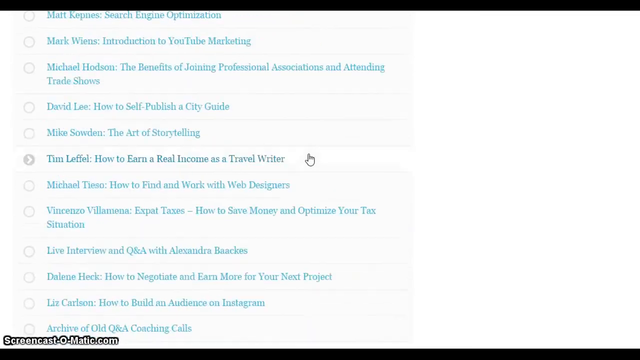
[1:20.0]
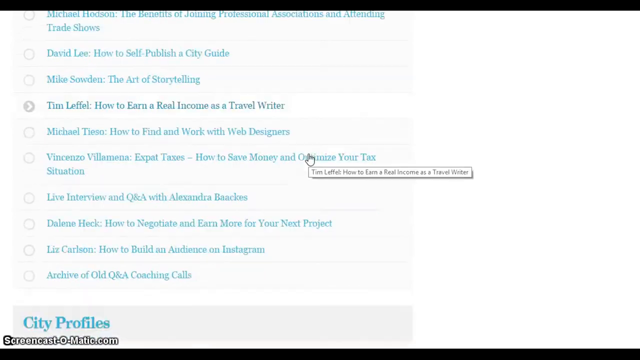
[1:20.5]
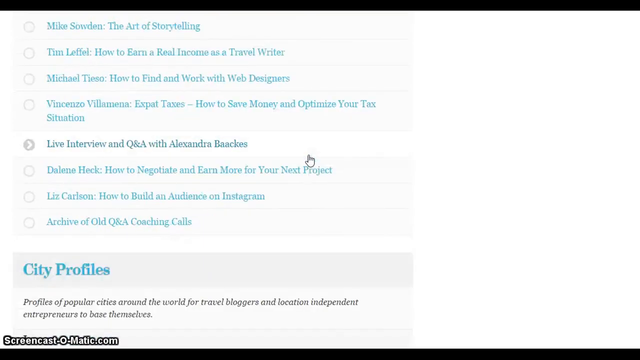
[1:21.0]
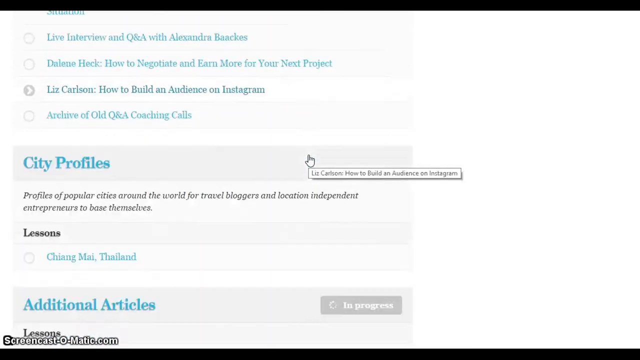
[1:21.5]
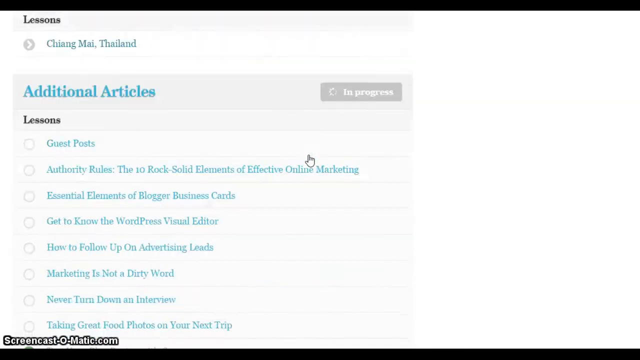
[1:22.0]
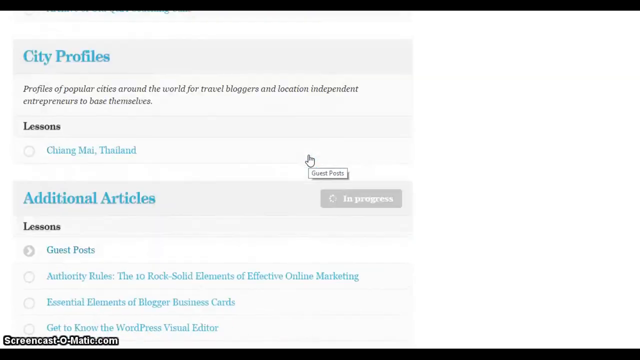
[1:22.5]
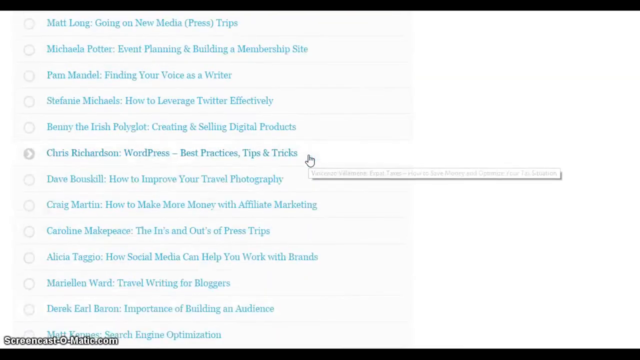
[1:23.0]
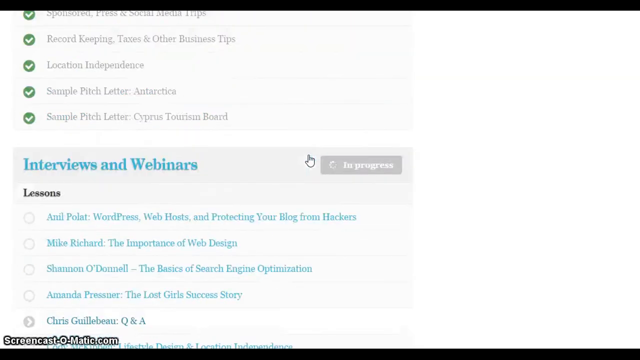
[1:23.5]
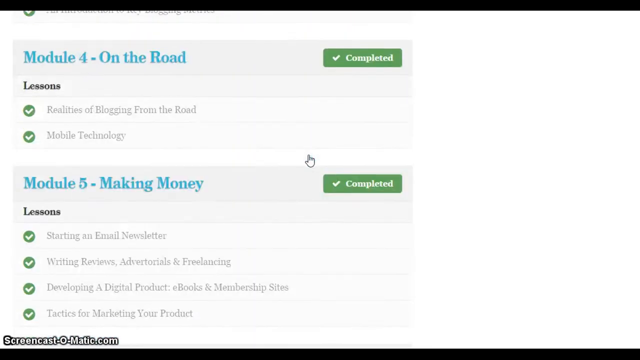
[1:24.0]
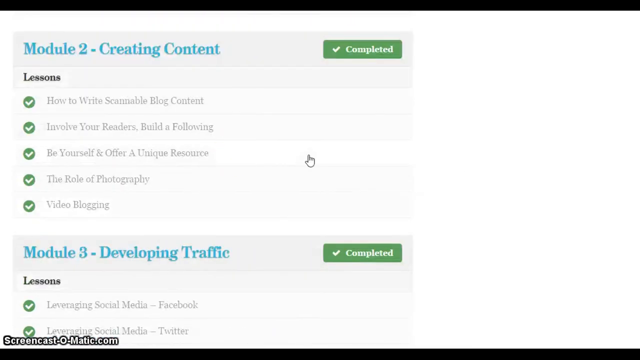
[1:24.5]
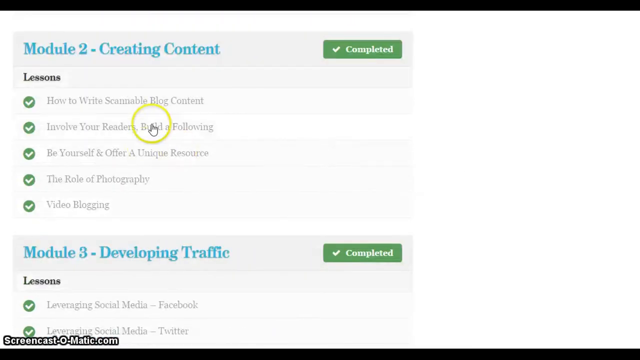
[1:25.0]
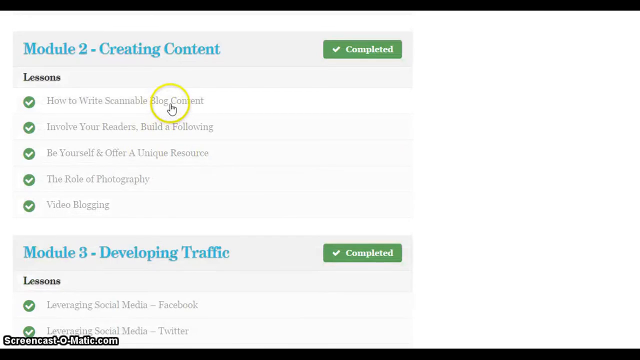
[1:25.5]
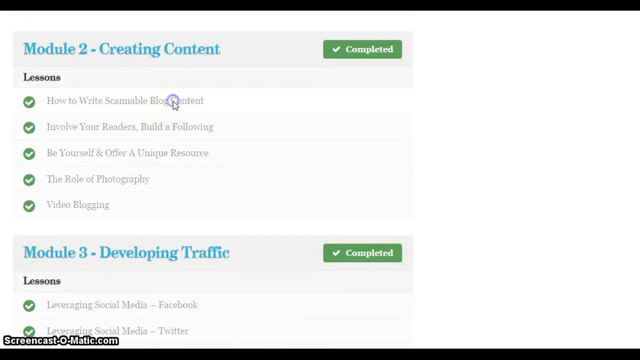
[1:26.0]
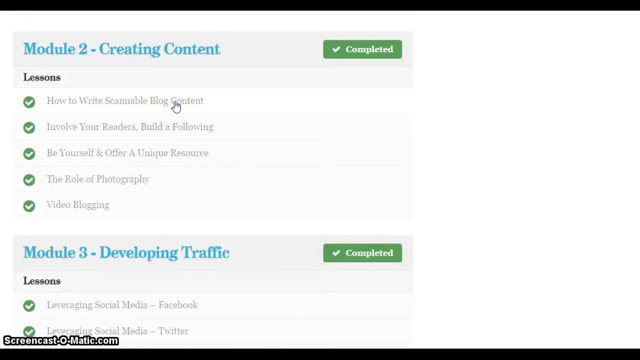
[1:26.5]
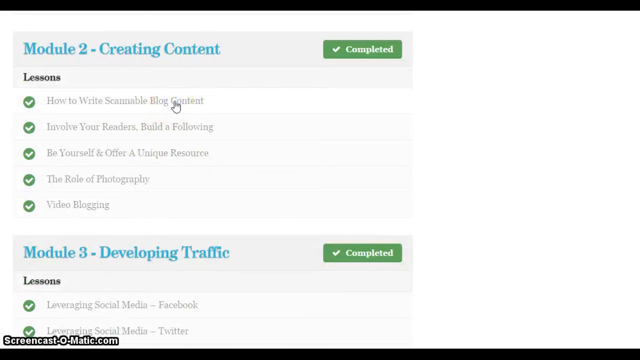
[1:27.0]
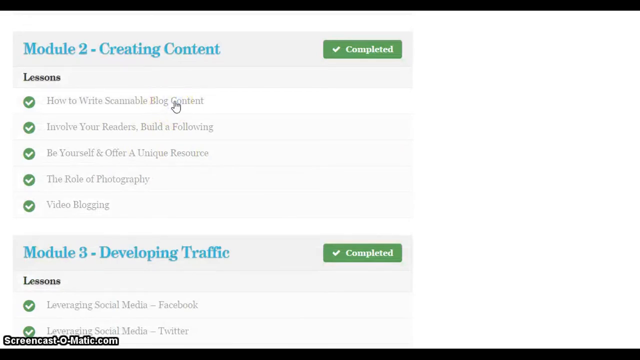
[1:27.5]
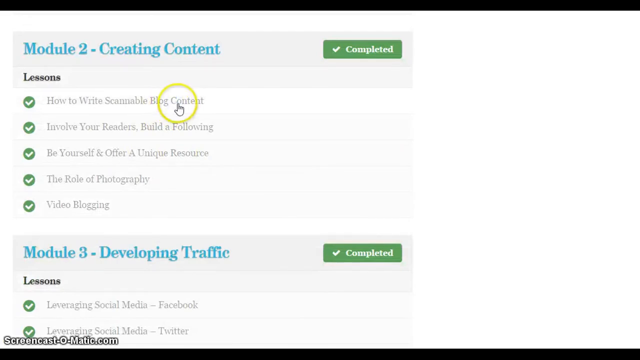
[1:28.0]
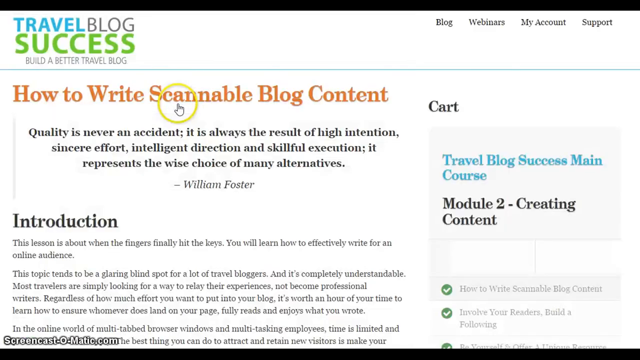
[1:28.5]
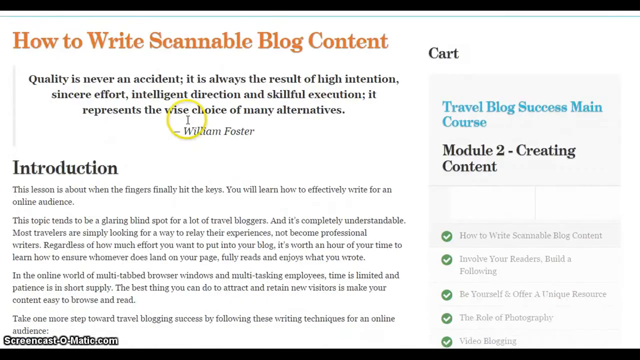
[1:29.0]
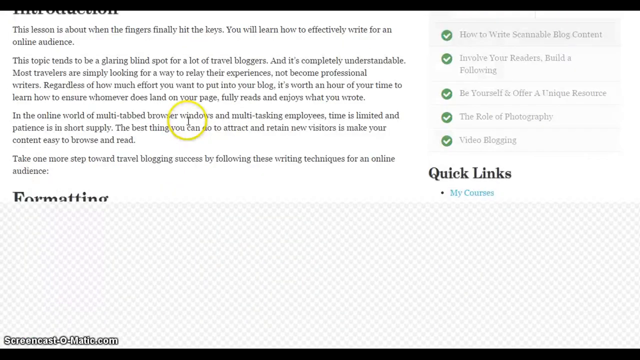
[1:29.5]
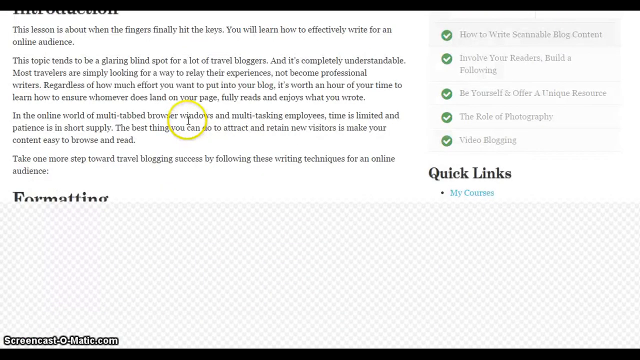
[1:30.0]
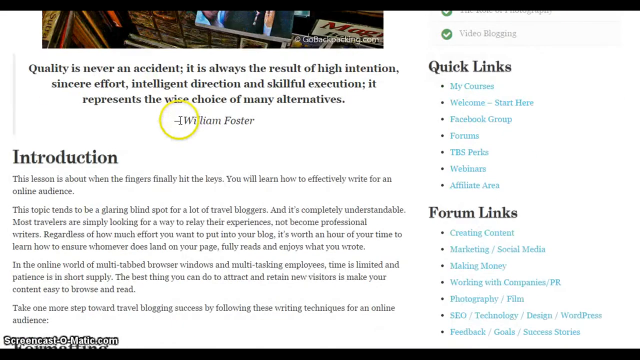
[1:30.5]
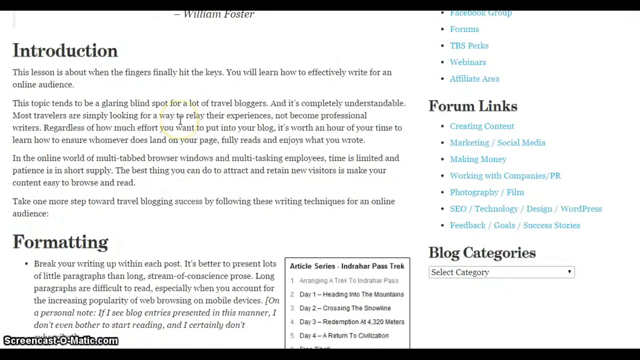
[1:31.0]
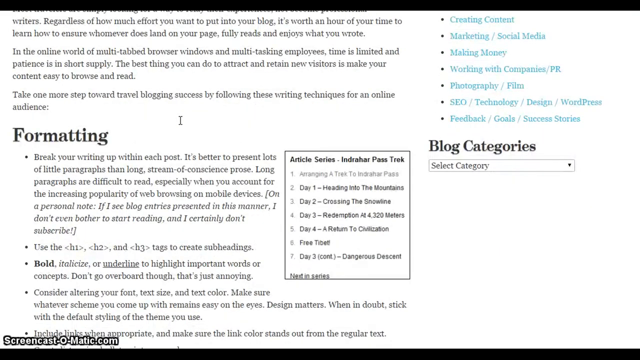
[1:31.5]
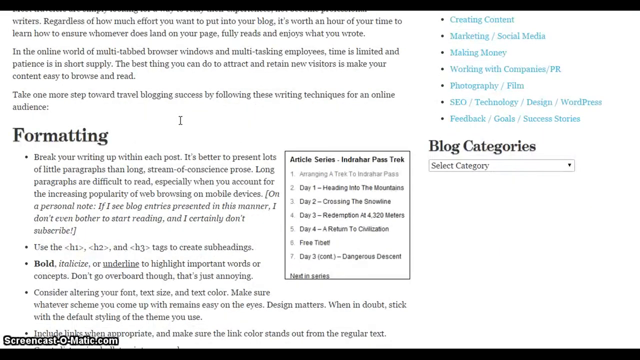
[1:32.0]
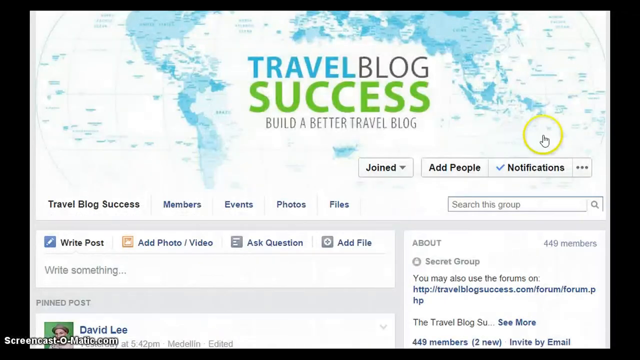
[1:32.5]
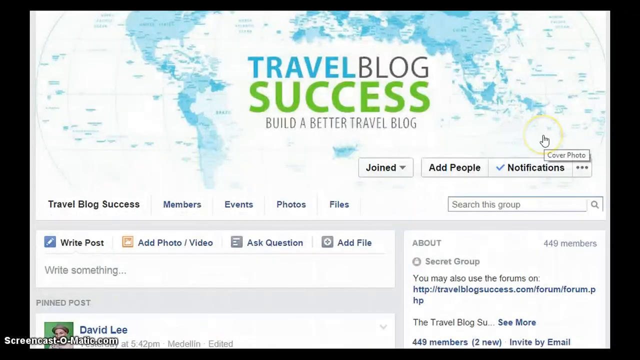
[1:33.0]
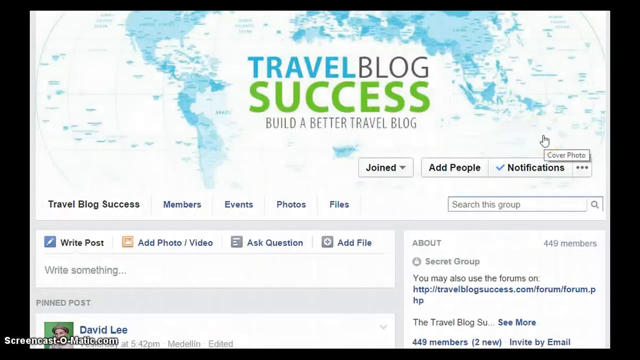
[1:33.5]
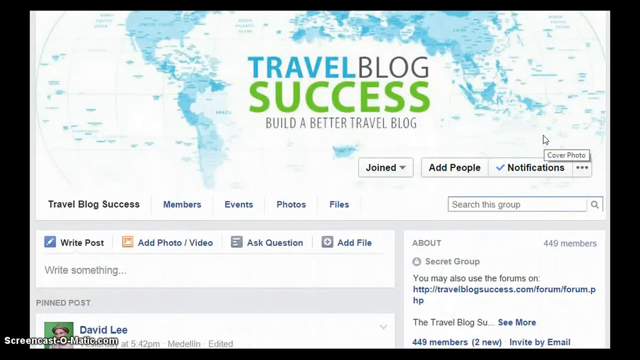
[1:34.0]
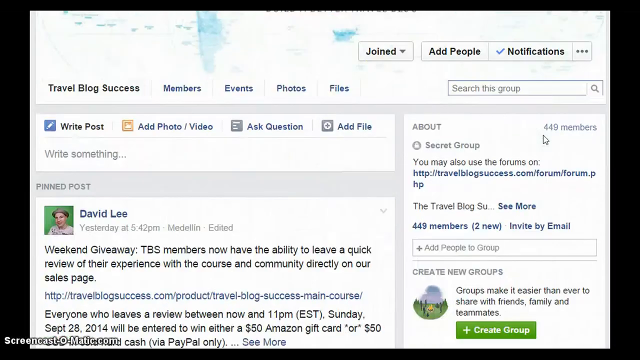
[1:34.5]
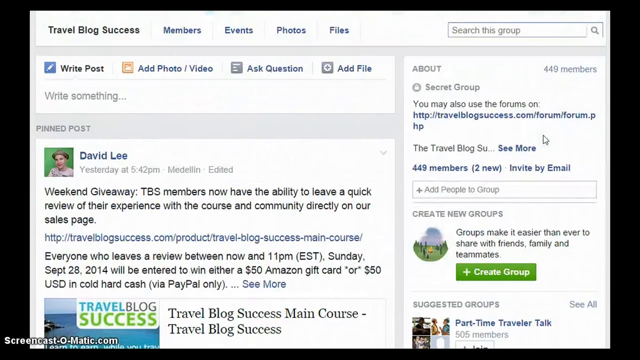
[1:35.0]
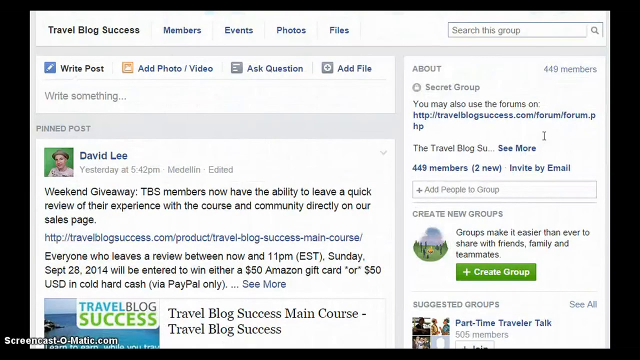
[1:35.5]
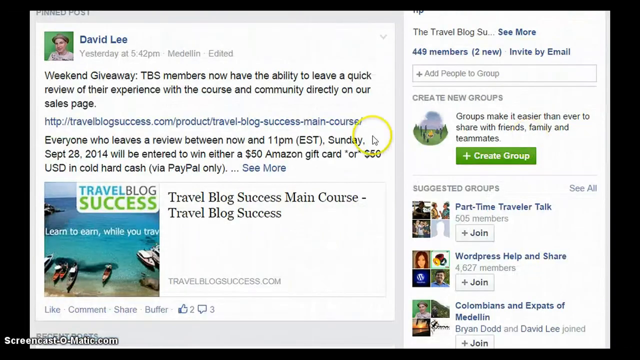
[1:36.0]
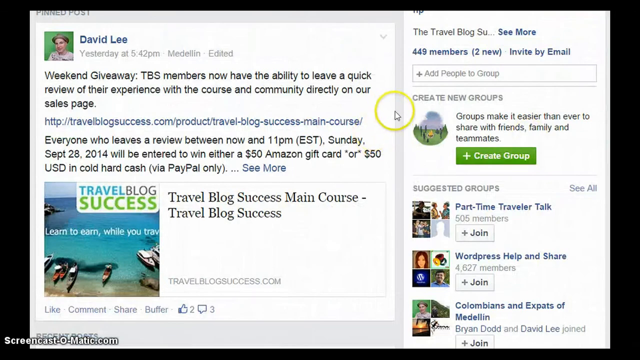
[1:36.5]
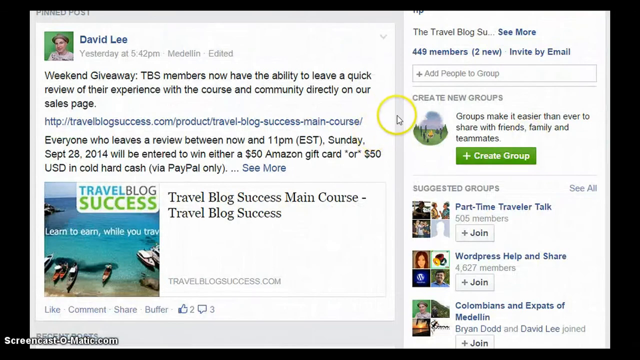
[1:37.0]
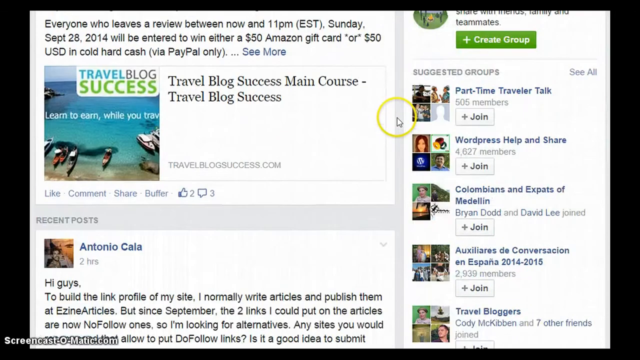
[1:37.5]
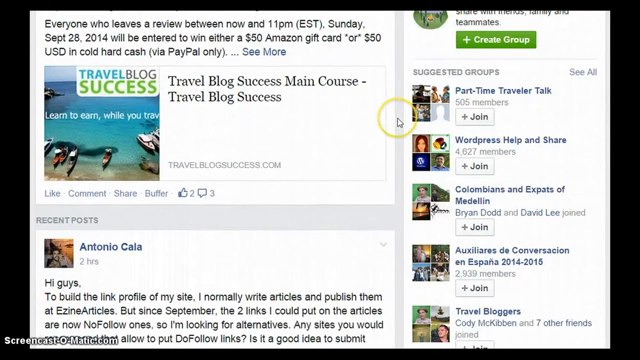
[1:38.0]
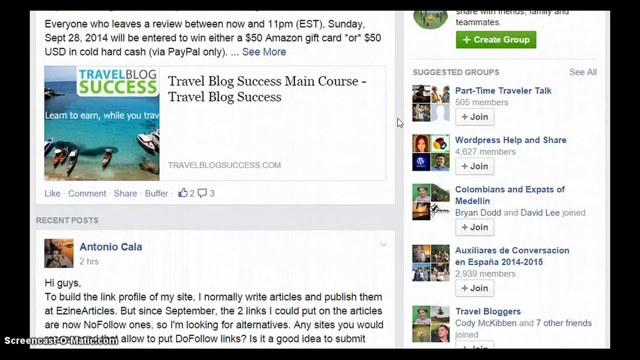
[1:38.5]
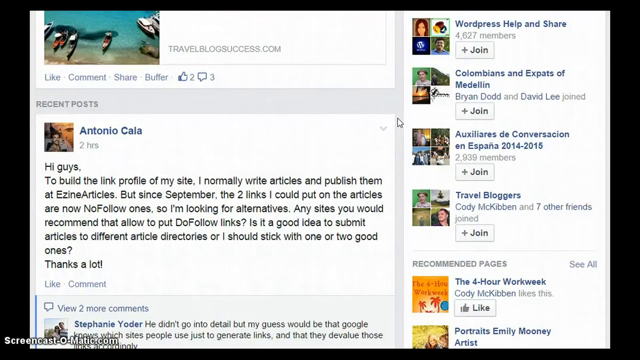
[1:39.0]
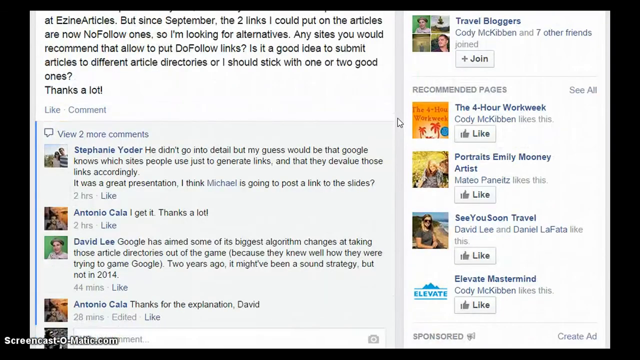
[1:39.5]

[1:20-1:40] A breakdown begins with "what you get". A little pencil is off to the side of the text "27 travel blogging lessons grouped in six modules". The modules are: building a foundation, six lessons, including picking a domain, web hosting and SEO; creating content, five lessons, including writing for the web, photography and intro to video blogging; developing traffic, five lessons, with examples such as metrics, social media and guest posts; strategies for the road, two lessons, covering how to blog while traveling and mobile technology; making money, five lessons, covering email lists, advertising, product creation and launches; and the sixth and last module, building a business, four lessons, consisting of networking, press trips and being a digital nomad, with the fourth lesson unclear.